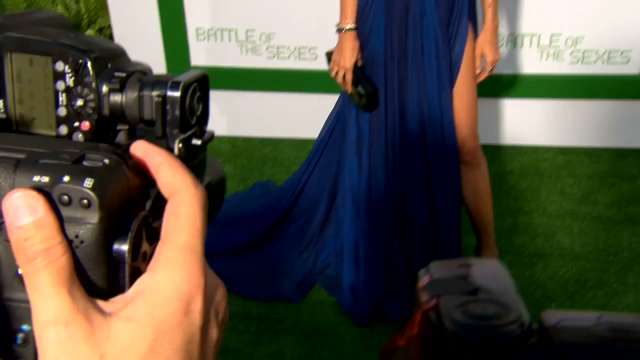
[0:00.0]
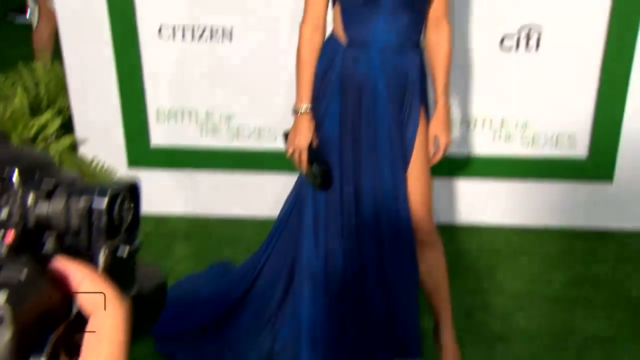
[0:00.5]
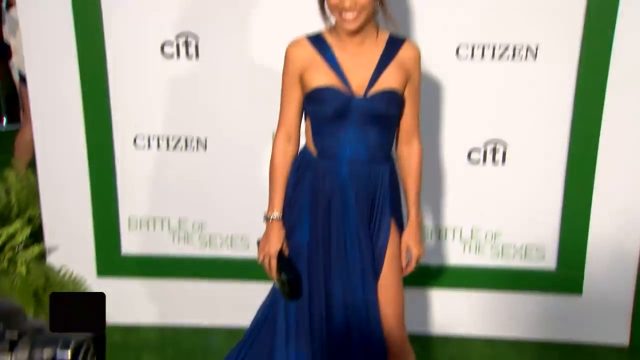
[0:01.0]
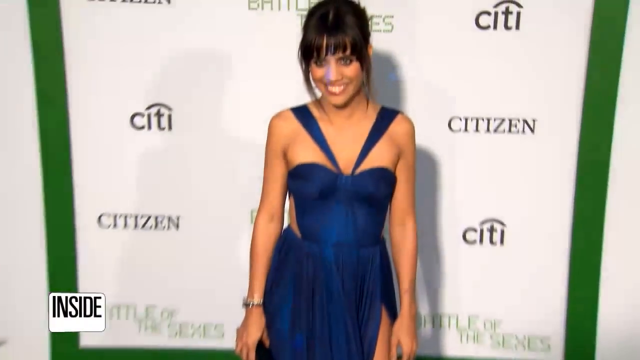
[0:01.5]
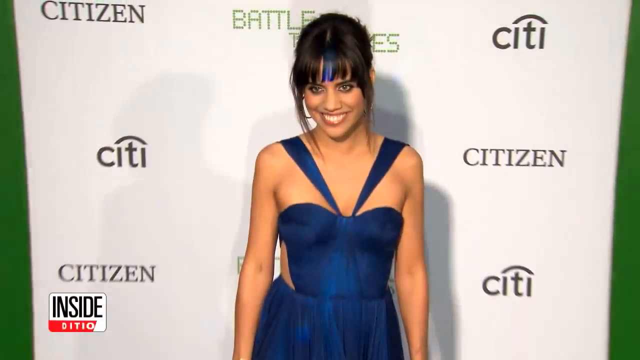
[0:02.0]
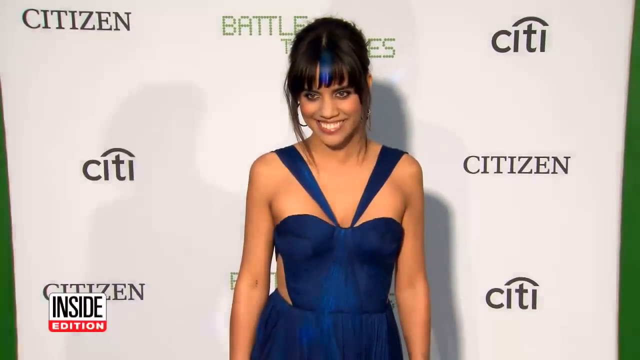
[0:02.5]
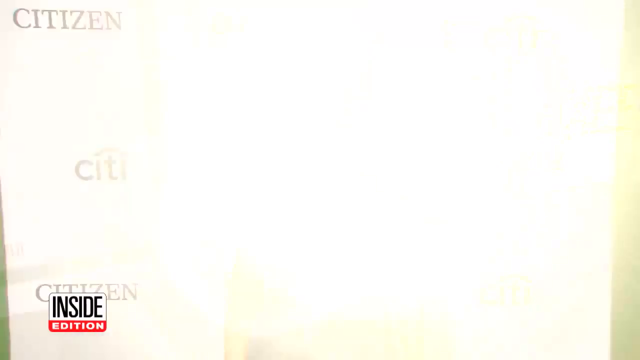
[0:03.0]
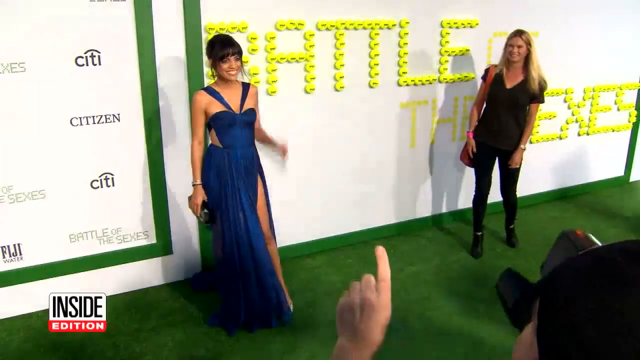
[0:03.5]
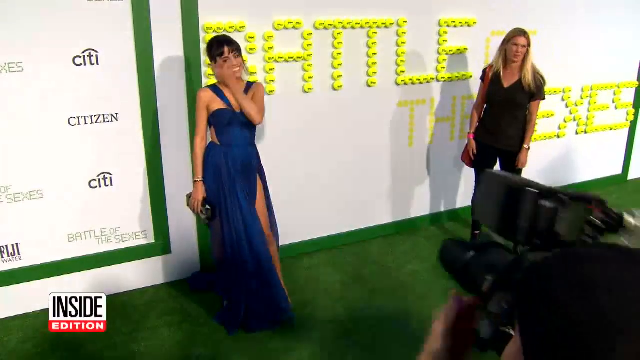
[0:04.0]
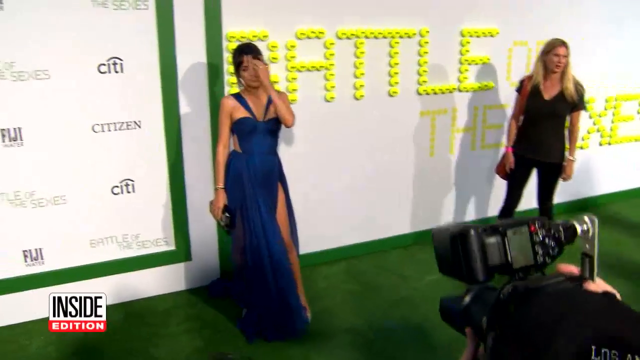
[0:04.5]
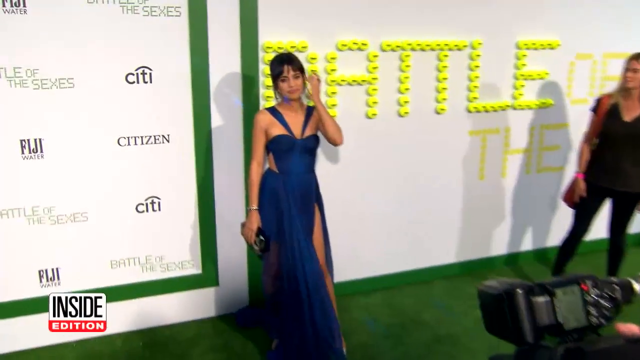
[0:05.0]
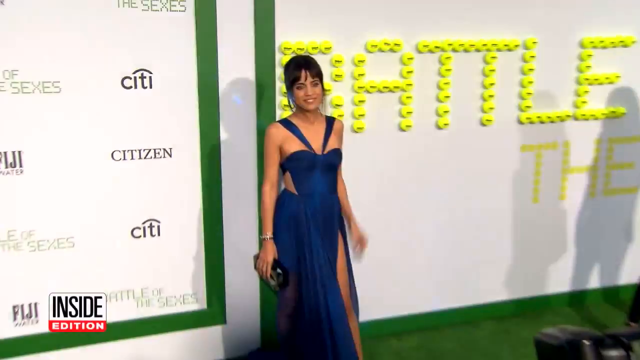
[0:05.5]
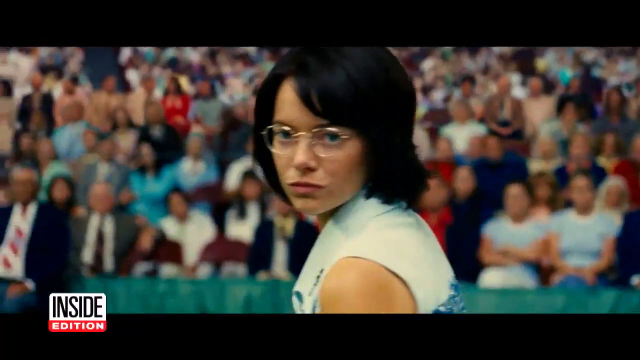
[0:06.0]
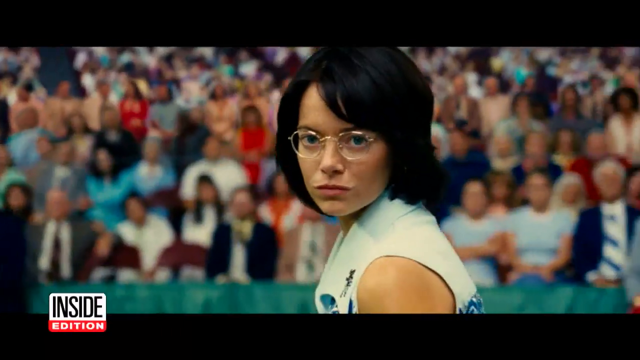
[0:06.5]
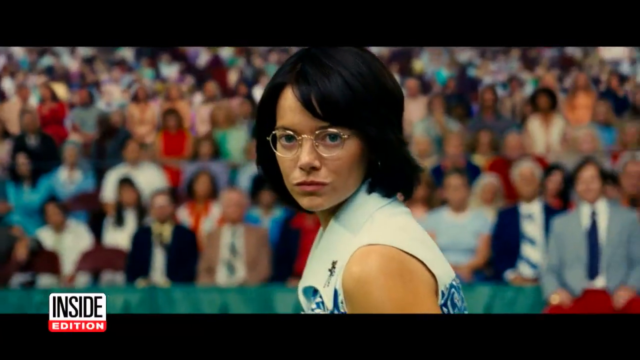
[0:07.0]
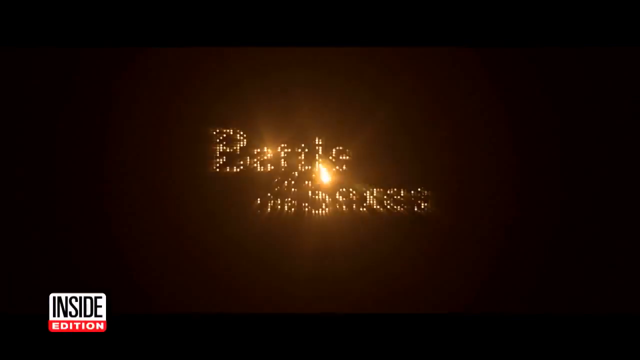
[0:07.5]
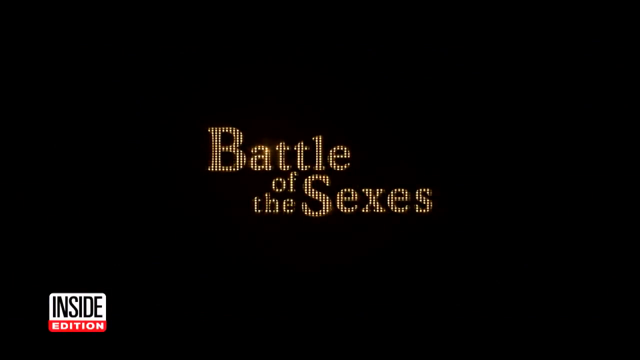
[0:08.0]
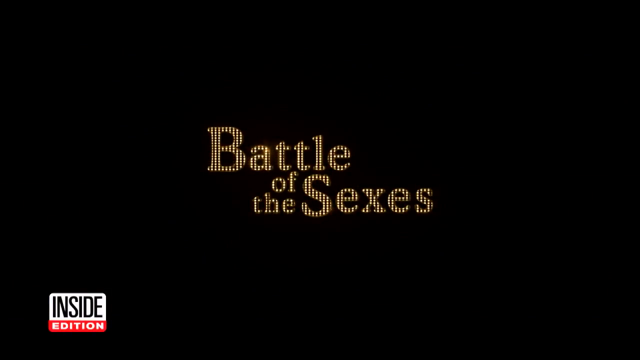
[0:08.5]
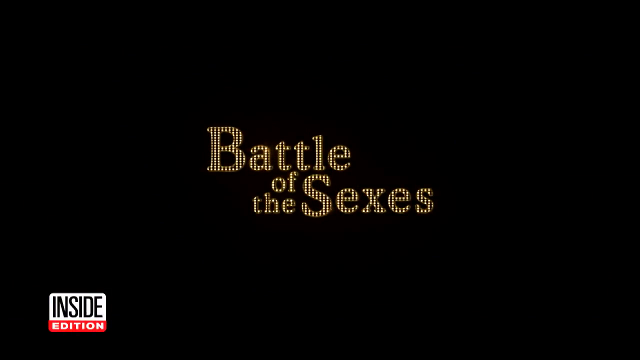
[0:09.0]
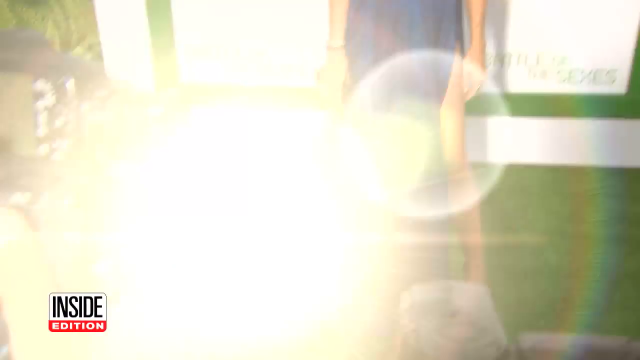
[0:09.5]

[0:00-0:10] A photographer takes a picture of a woman standing by a banner that reads "Citizen City." She wears an all bright blue dress, has a smile, a brown wig, and a watch on her right hand. As the camera zooms in on her, her big bold eyes become visible. Standing beside her is a tall woman with blonde hair, wearing a short-sleeve t-shirt and long jeans. Behind them is an all-white banner with bold yellow capital letters that reads "Battle of the Sexes."